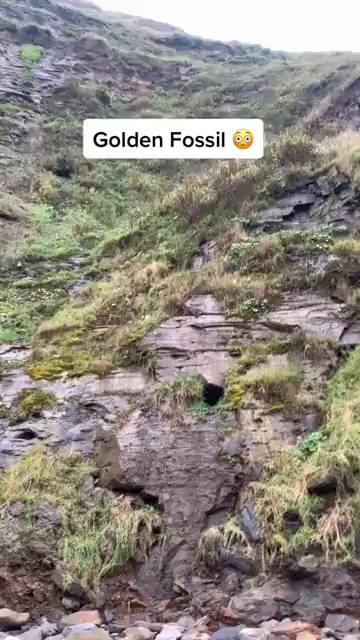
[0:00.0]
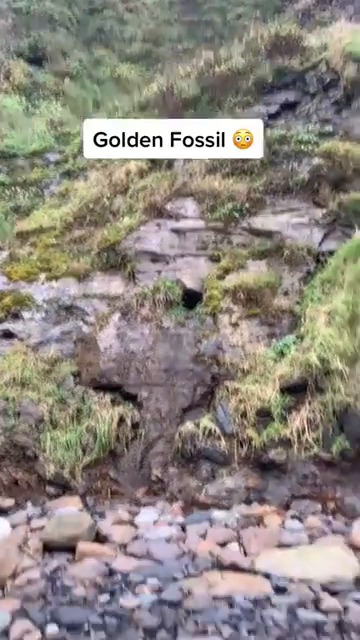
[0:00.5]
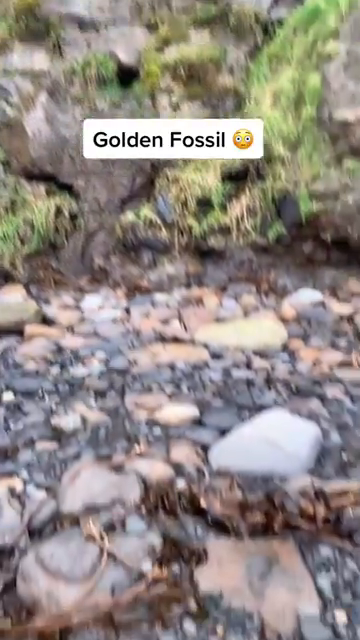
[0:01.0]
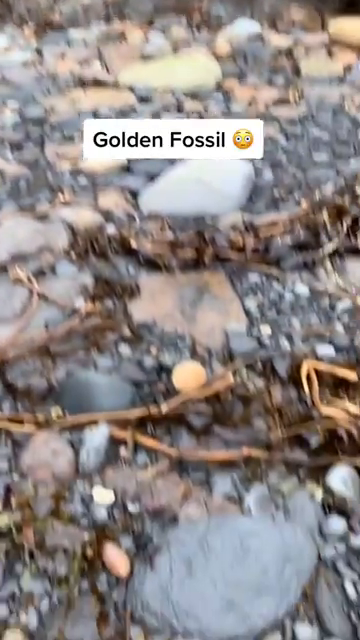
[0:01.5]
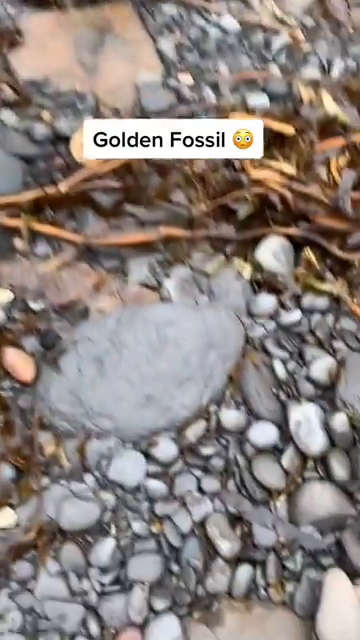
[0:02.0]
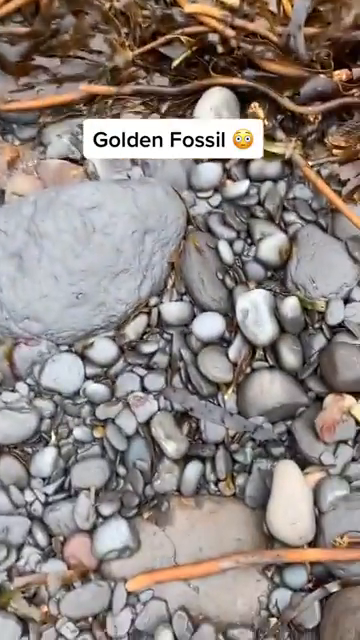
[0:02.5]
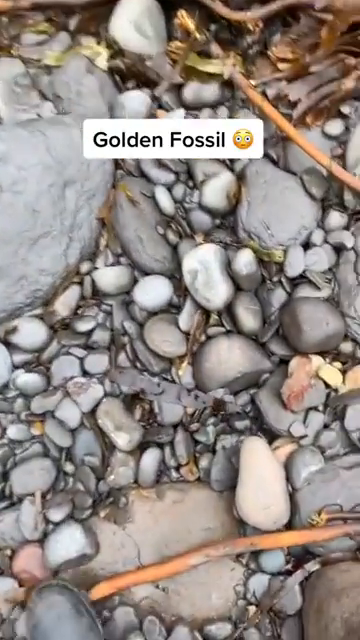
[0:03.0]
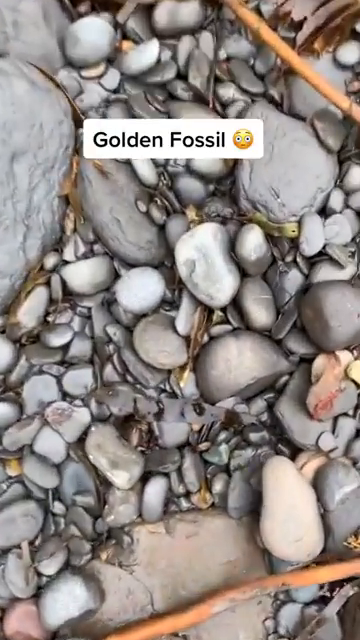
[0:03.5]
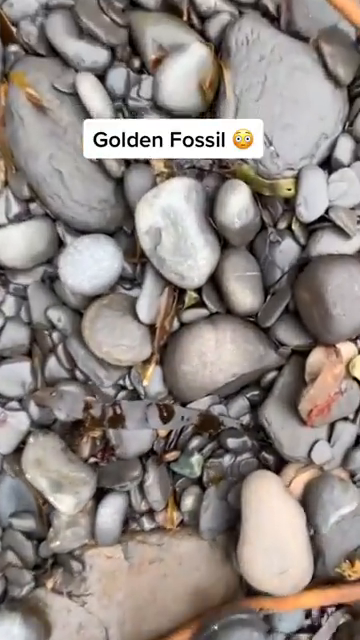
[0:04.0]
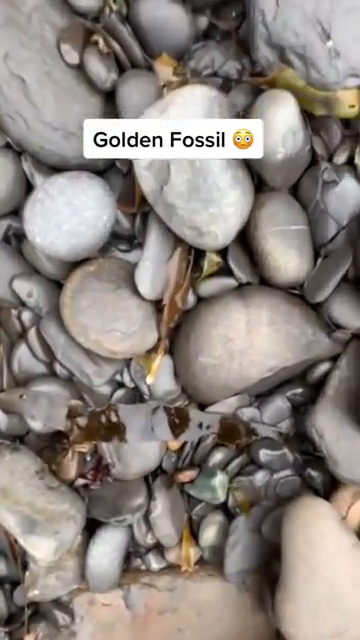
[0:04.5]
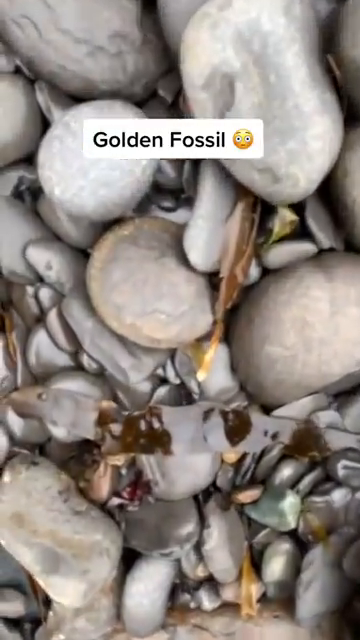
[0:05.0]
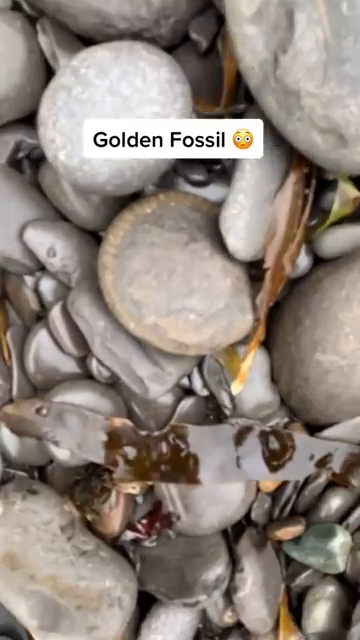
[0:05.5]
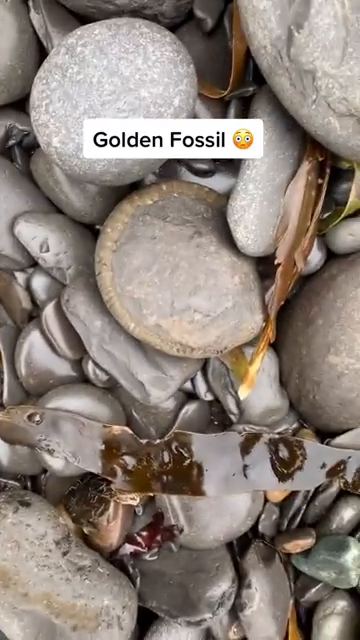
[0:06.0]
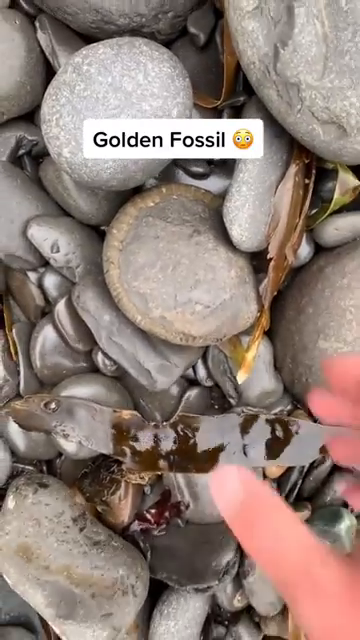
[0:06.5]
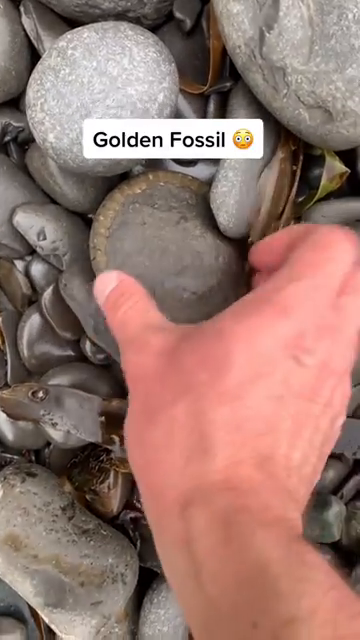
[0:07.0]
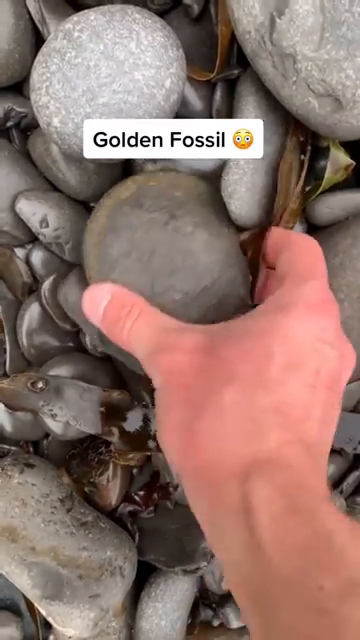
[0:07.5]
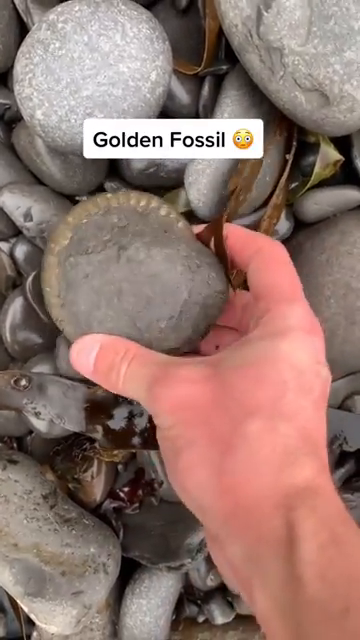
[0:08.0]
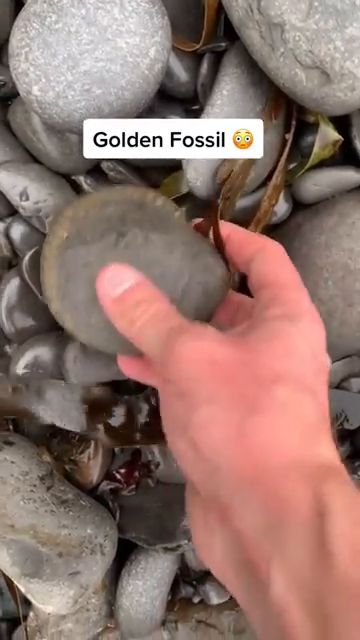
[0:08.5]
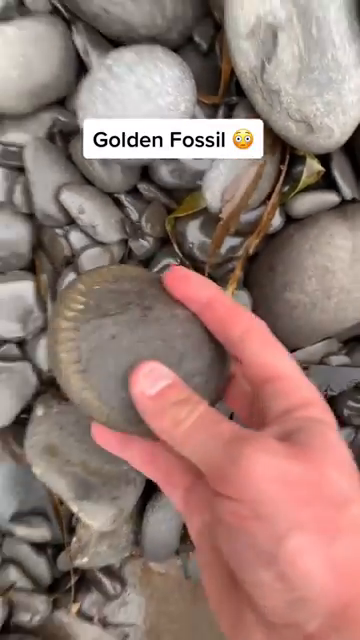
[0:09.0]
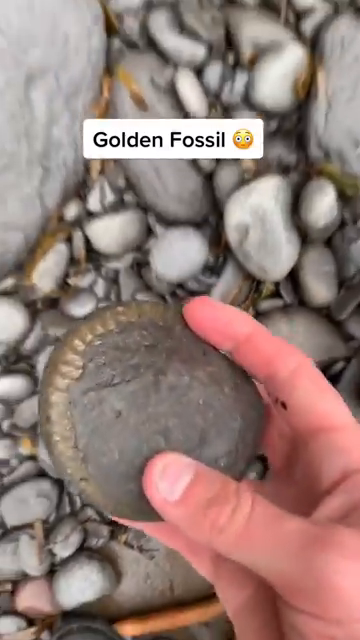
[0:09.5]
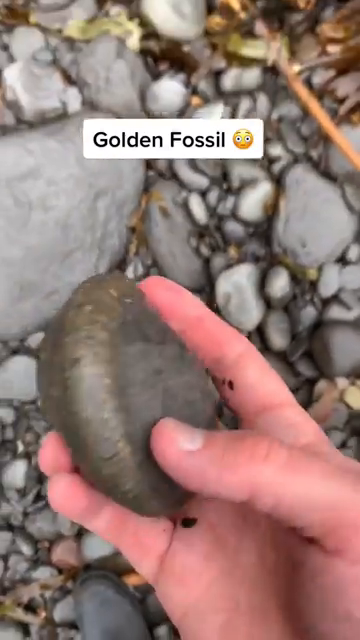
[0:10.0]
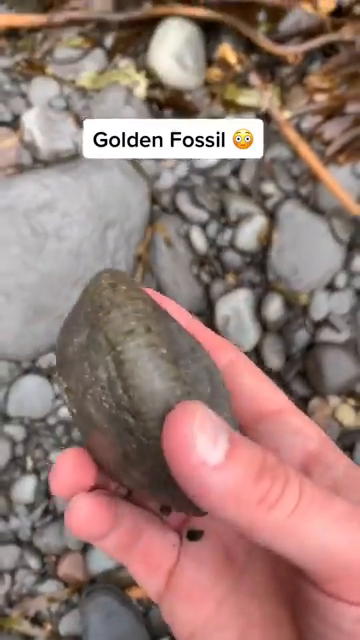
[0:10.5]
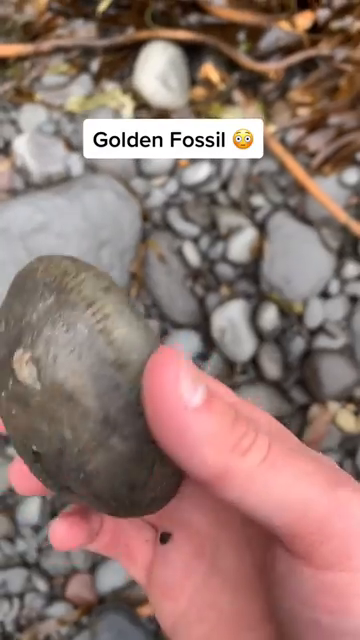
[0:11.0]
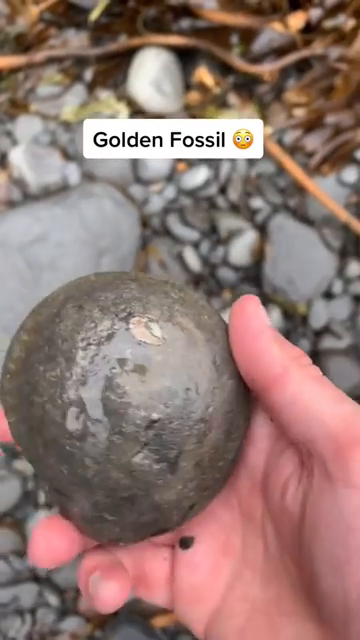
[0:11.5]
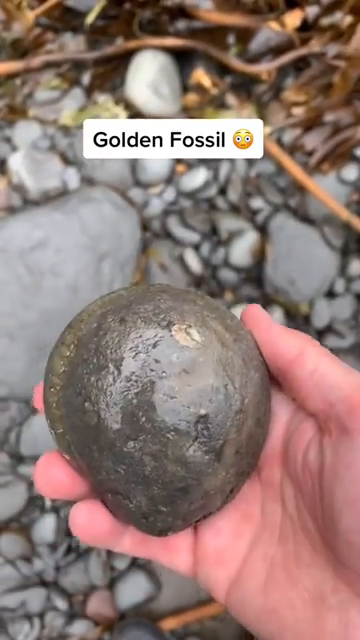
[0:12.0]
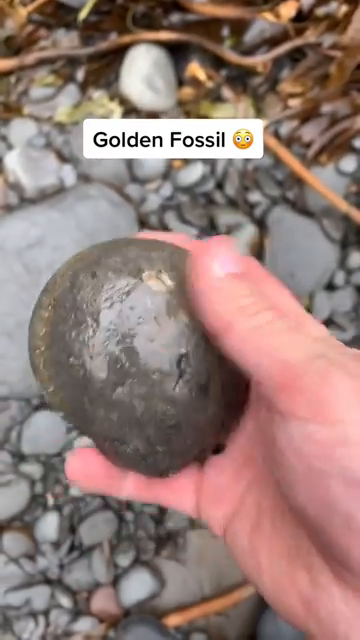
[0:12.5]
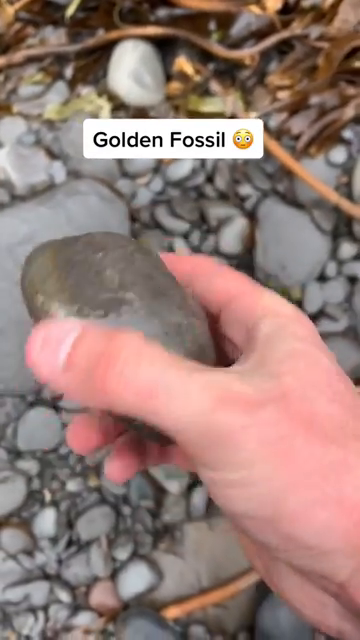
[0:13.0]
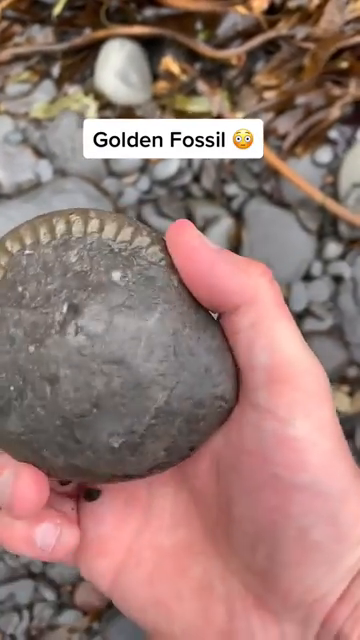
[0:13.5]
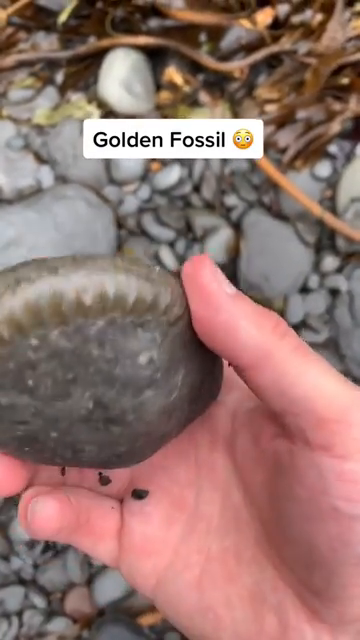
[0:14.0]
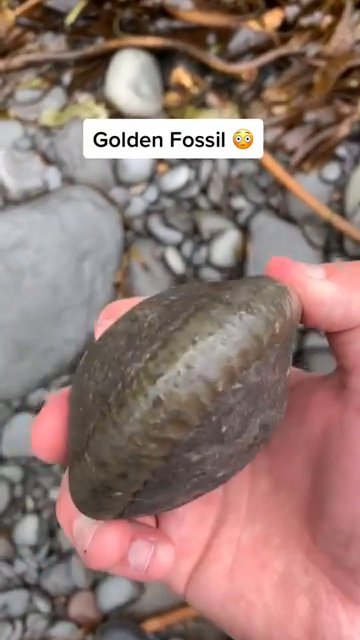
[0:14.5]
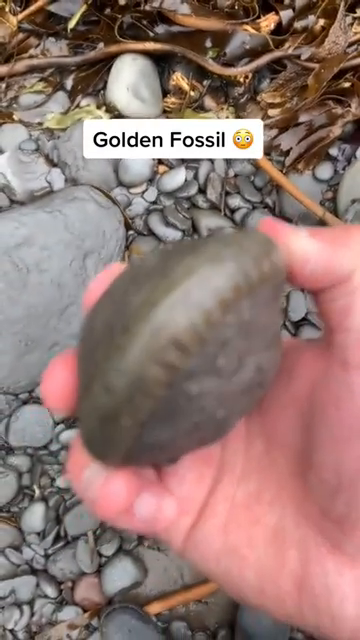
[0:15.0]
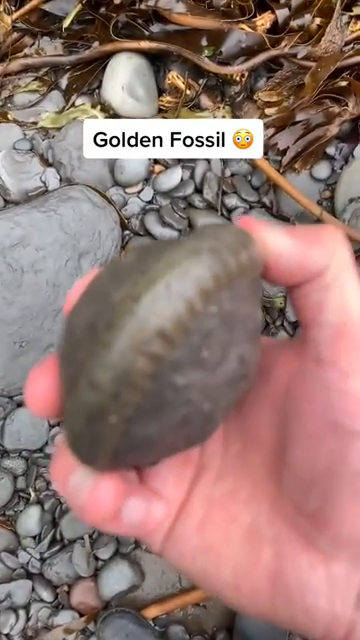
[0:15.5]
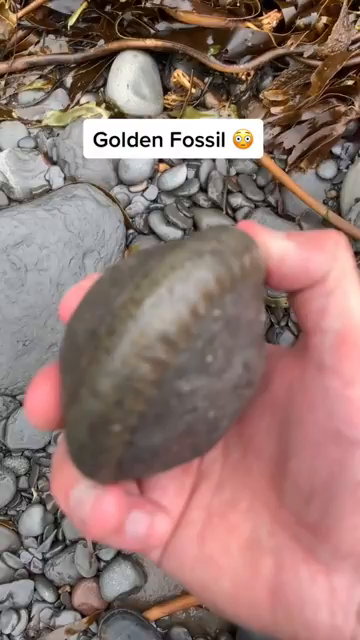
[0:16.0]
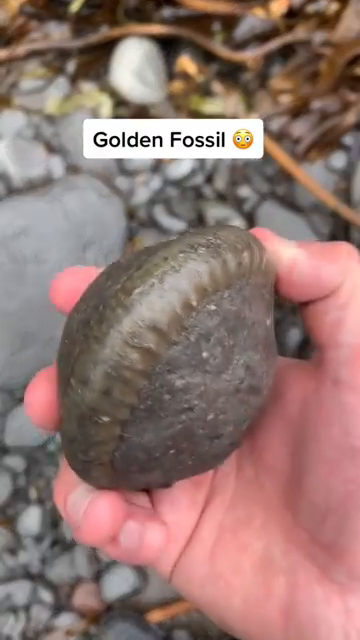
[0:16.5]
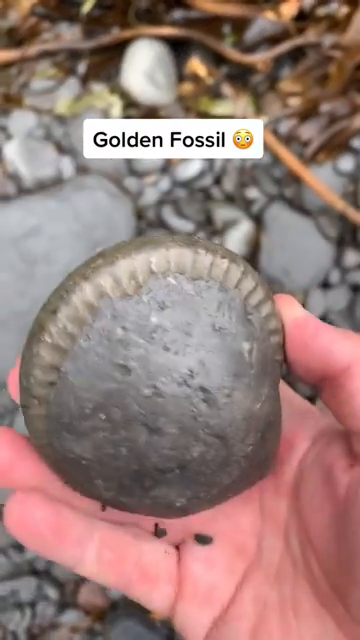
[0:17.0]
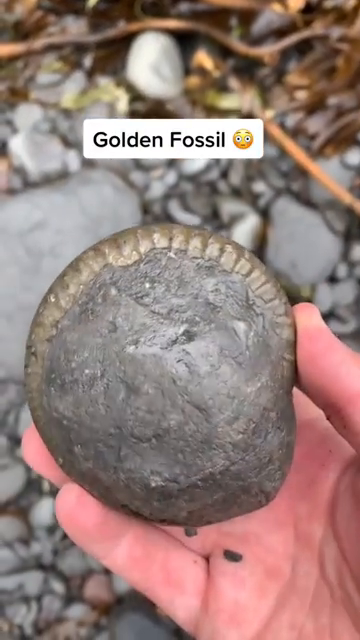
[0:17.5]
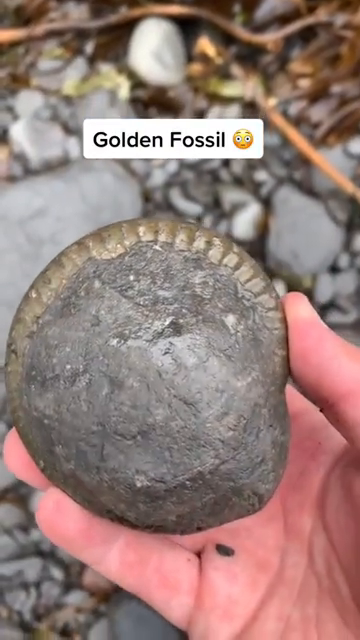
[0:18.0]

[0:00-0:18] A golden fossil, possibly an ammonite, is found in a rocky beach area. A person walks up to the rock-like object, picks it up, and turns it over in front of the camera. The way it sits suggests it was planted there to look like a discovery rather than actually found.